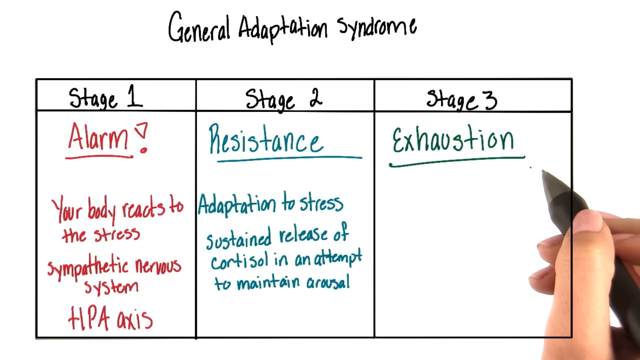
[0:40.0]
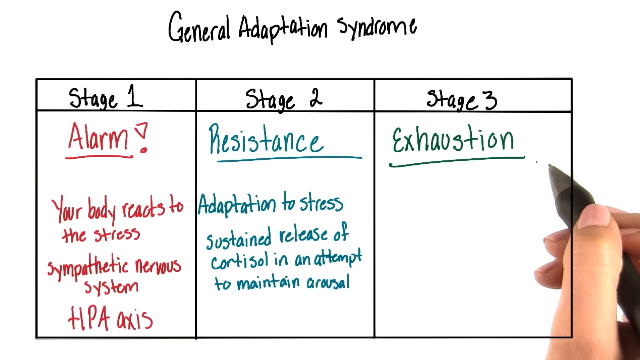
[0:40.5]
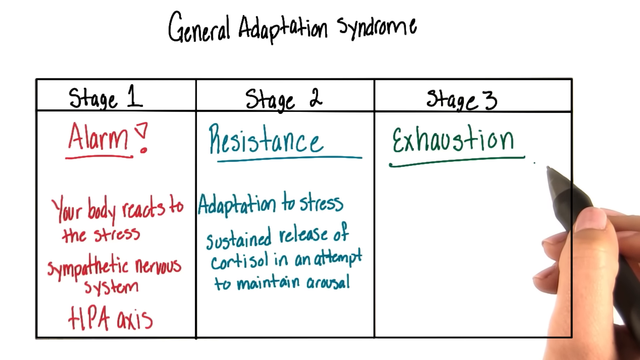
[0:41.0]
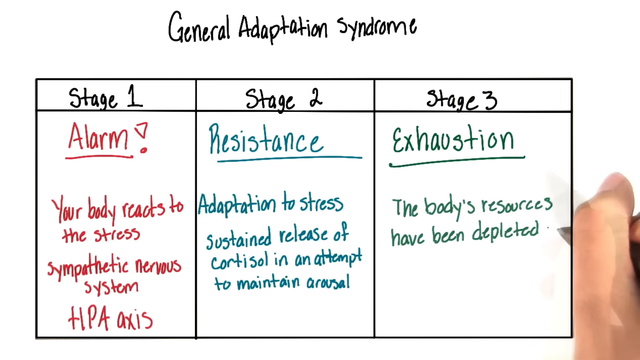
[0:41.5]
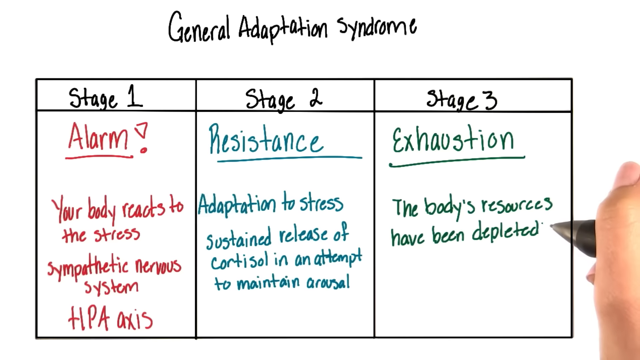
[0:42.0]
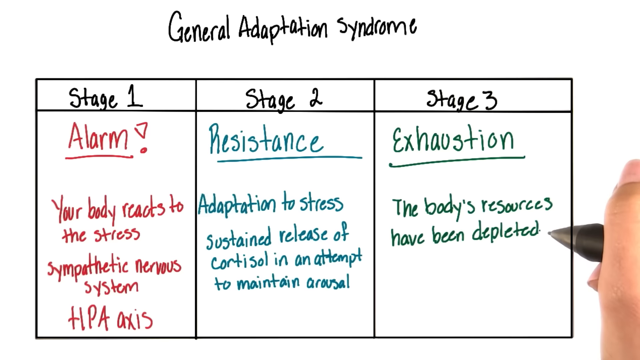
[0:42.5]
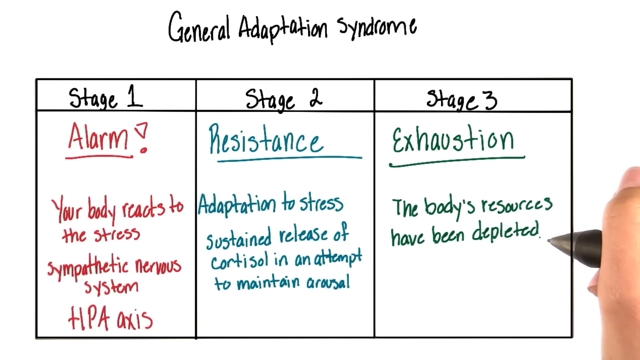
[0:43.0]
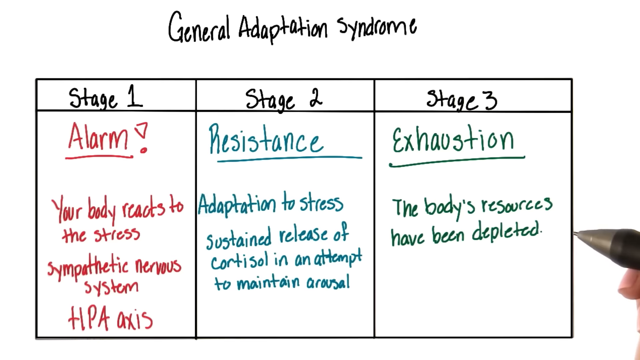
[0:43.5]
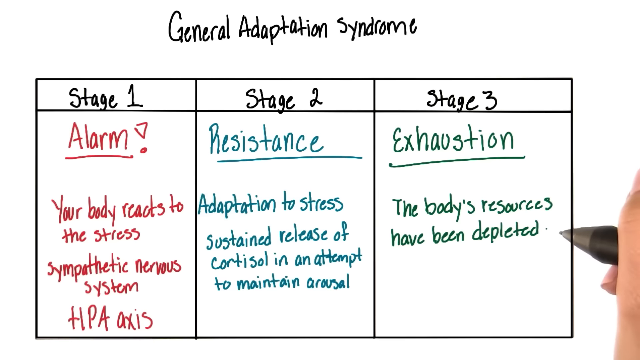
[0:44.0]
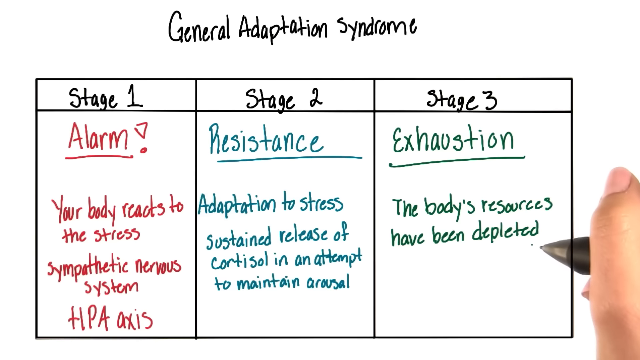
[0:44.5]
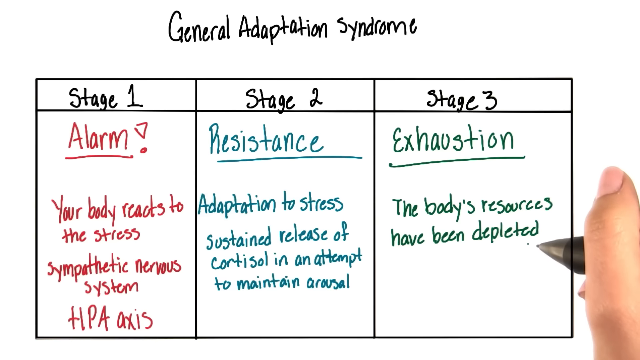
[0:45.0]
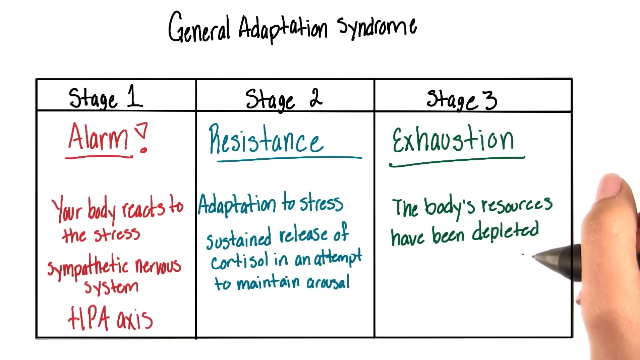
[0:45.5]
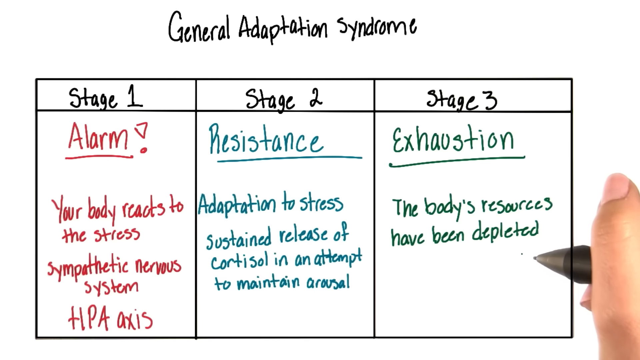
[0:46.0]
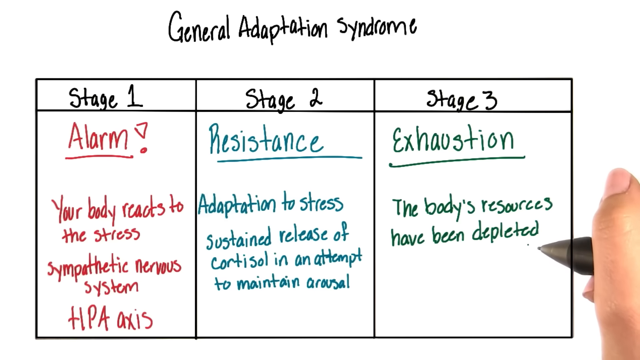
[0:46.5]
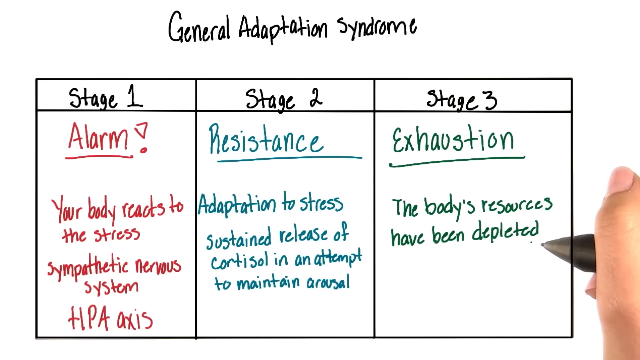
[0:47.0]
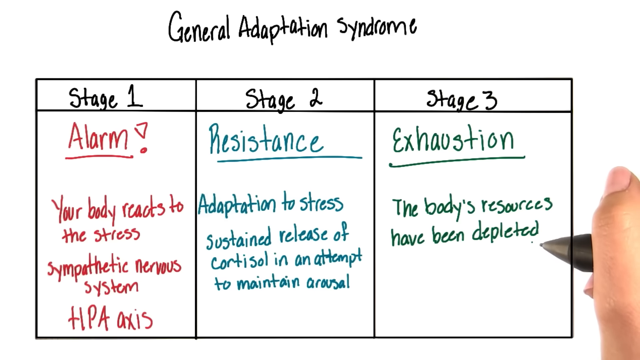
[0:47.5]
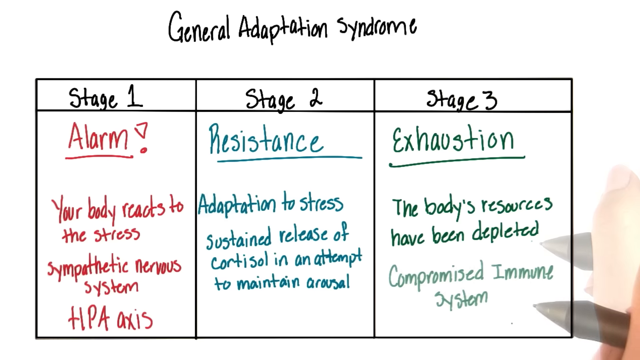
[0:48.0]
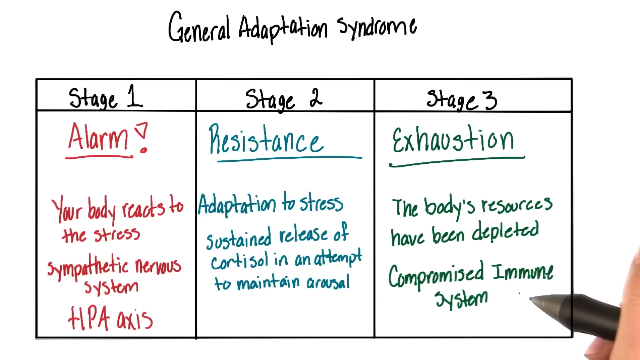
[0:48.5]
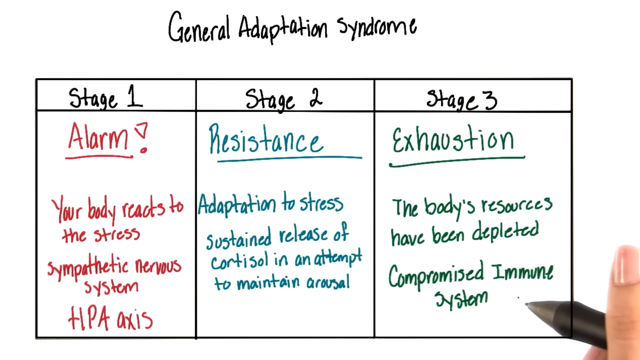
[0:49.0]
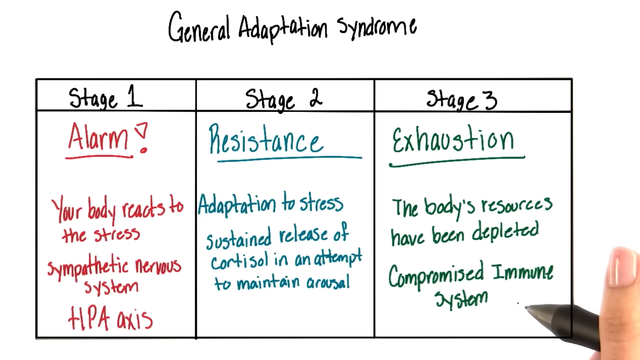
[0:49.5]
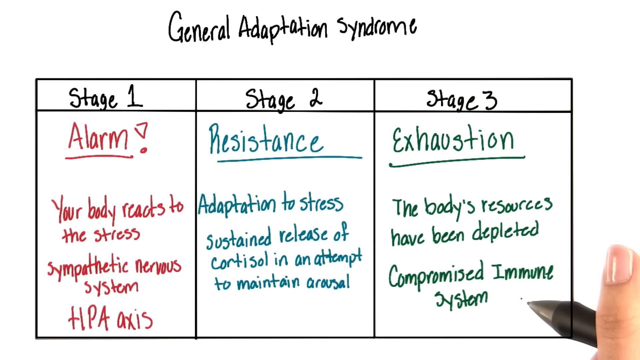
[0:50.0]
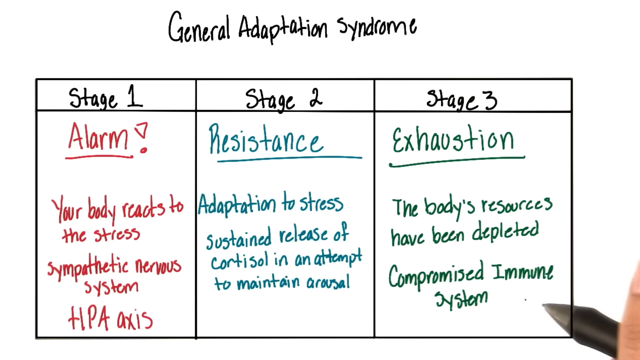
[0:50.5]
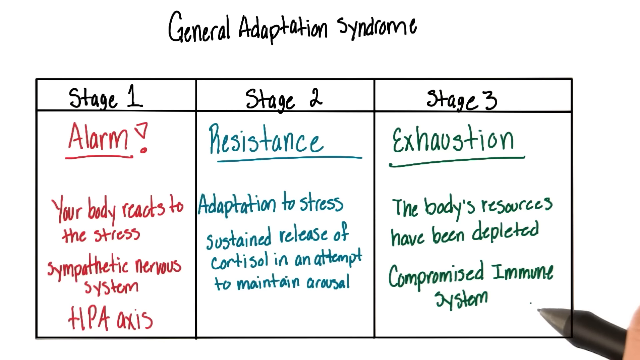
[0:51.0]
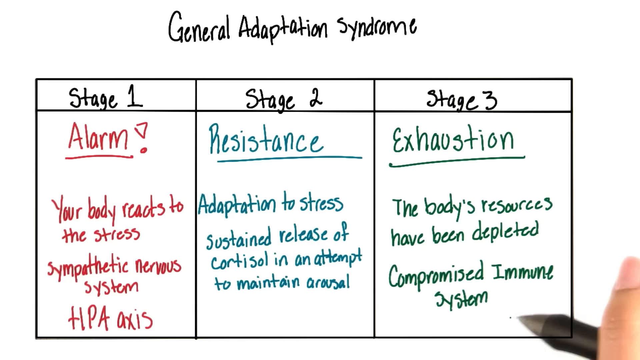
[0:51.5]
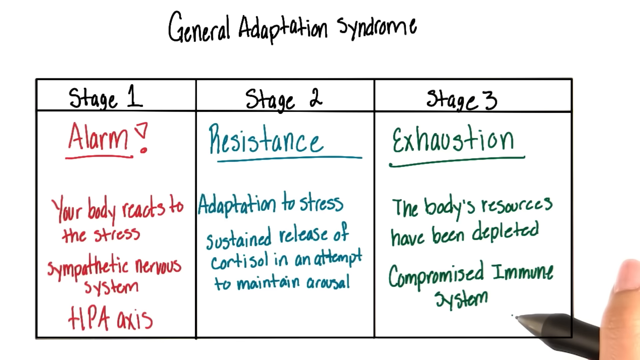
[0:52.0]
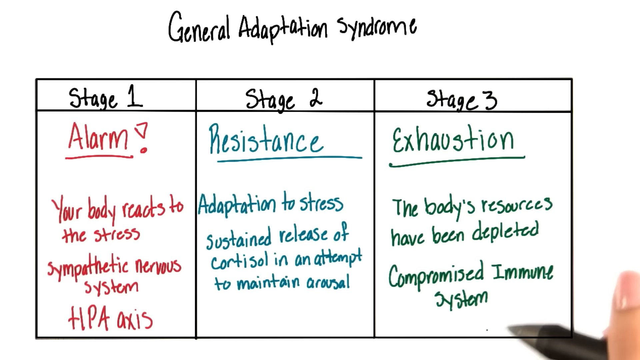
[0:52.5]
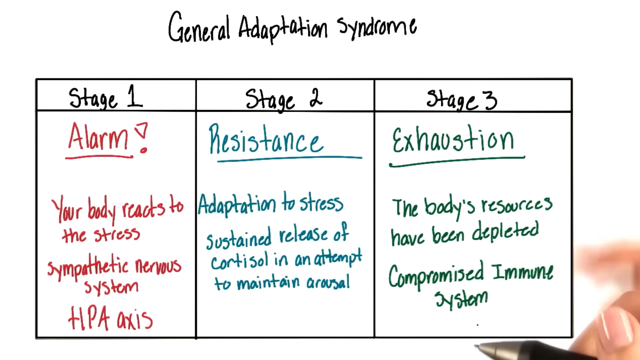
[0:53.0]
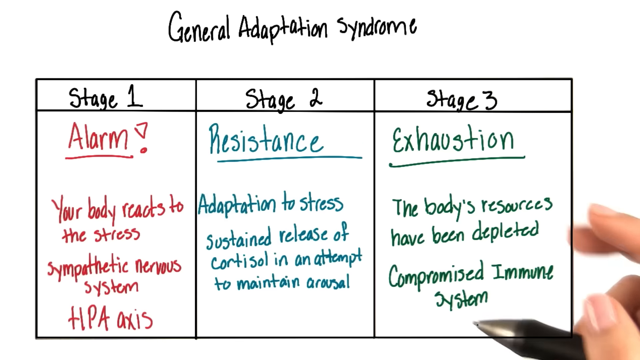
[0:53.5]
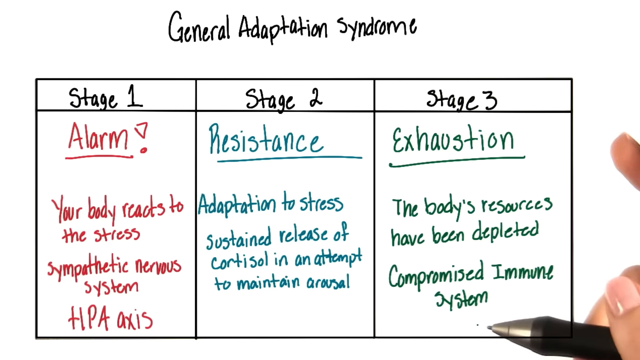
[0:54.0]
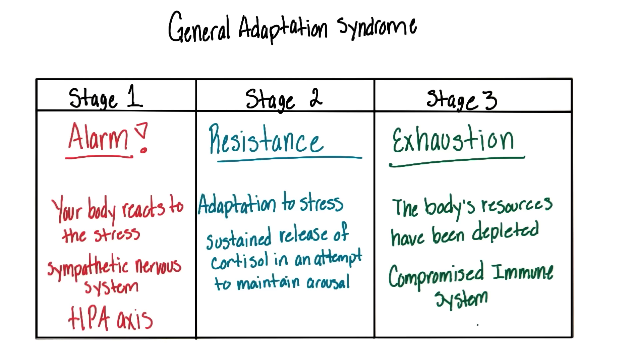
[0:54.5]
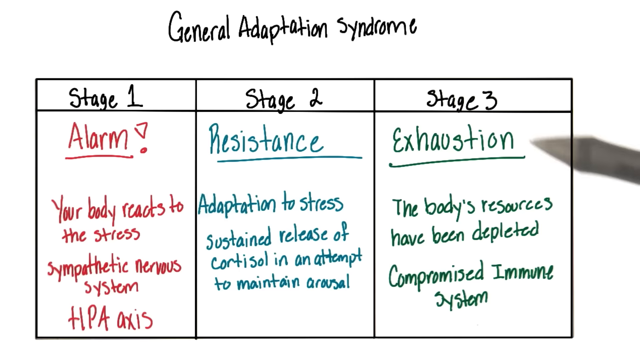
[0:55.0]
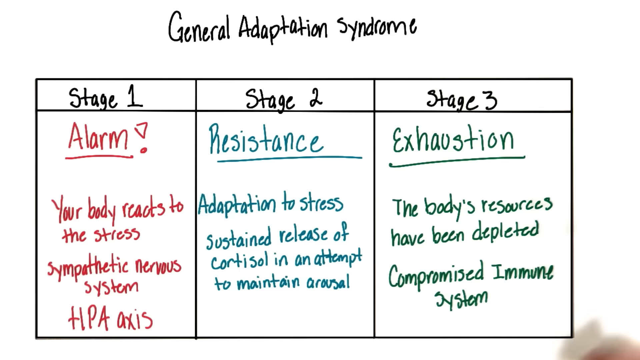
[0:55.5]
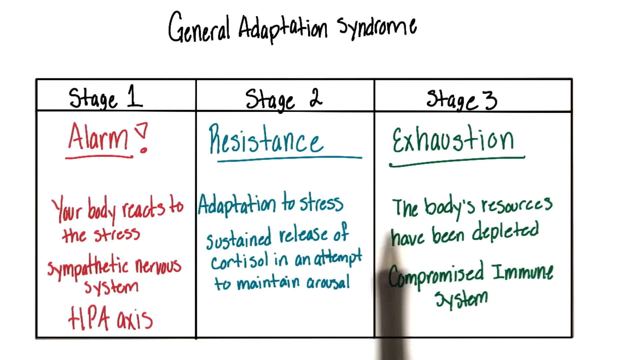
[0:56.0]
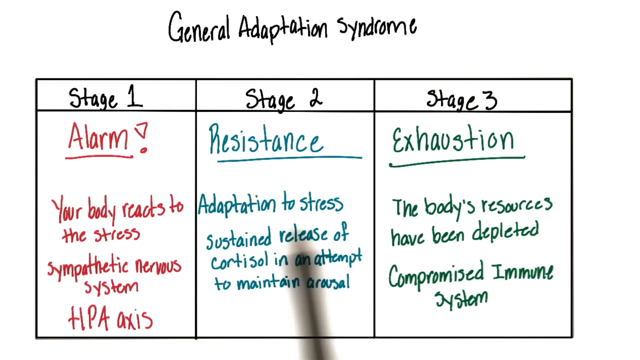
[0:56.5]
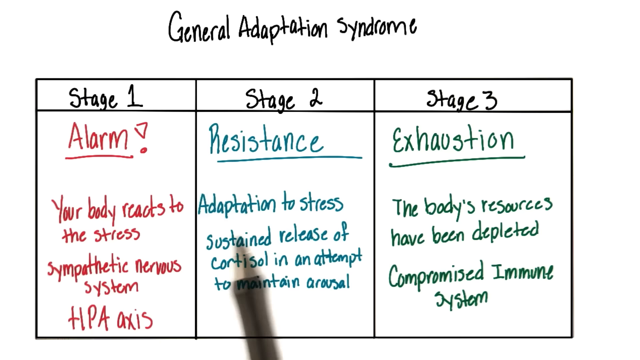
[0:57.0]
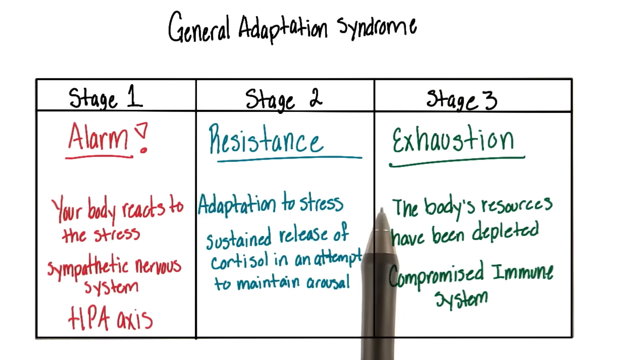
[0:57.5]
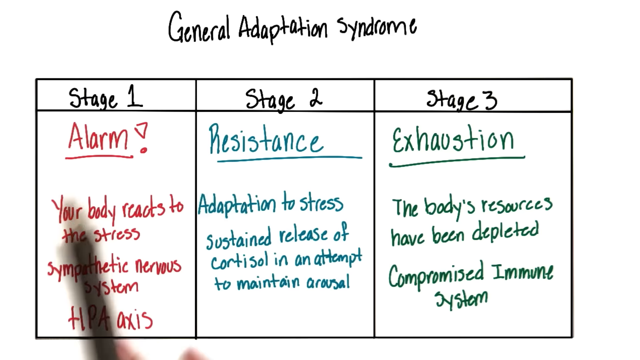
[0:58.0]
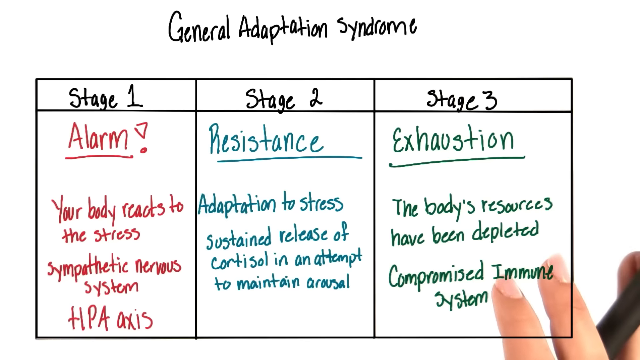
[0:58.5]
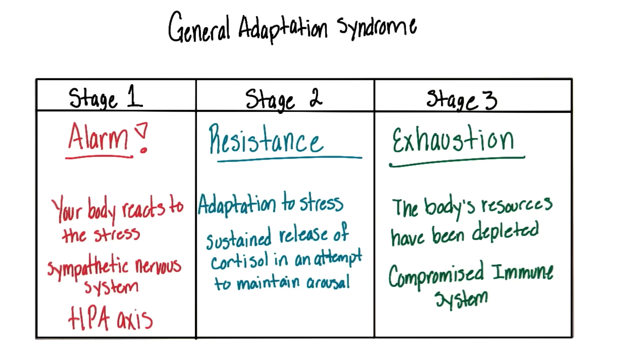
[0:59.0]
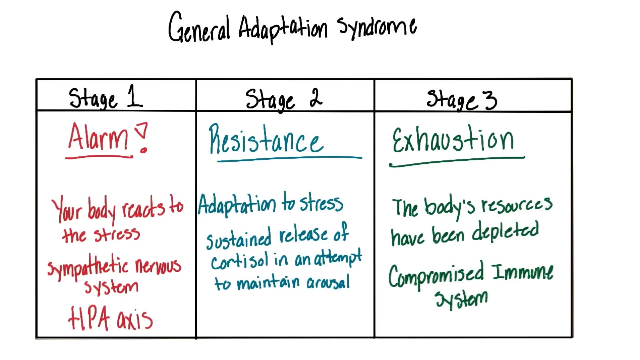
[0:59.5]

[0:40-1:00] The board looks the same, with "exhaustion" written in green and underlined. The woman writes "the body's resources have been depleted", moves her pen around a little, and then adds "compromised immune system". She moves the pen and her fingers around and points the pen at different parts of the whiteboard. The pen seems to show a small point on the whiteboard as she uses it, and its dark gray, silver gray top part sometimes shows as she moves her hand around the screen.